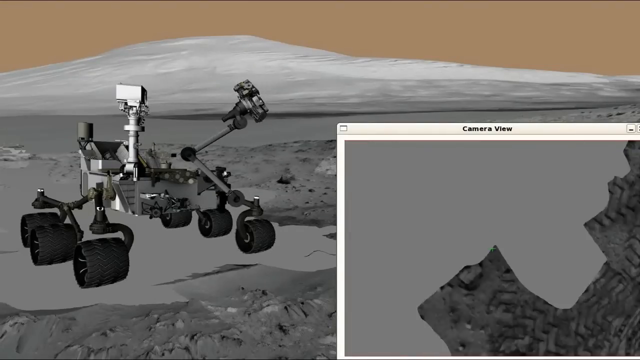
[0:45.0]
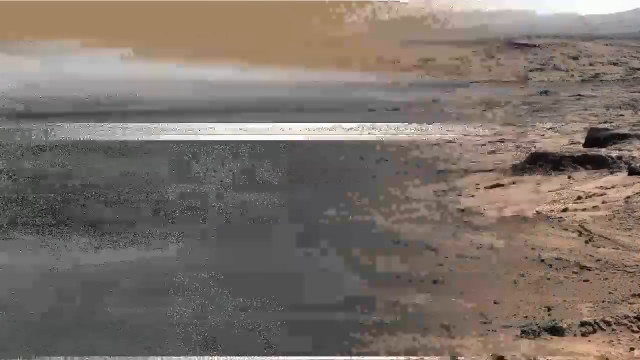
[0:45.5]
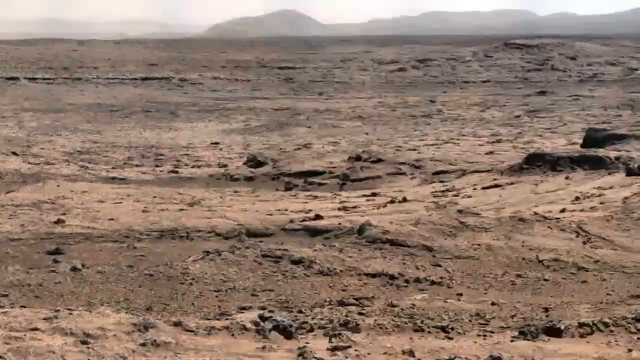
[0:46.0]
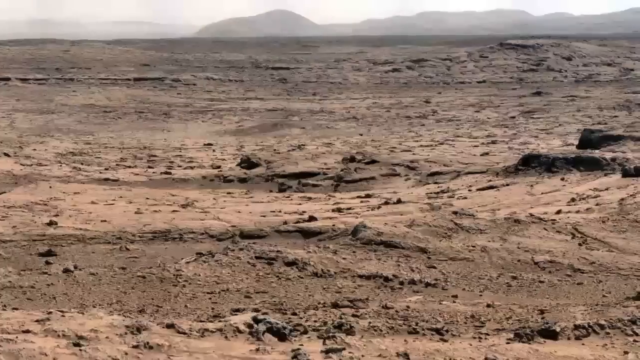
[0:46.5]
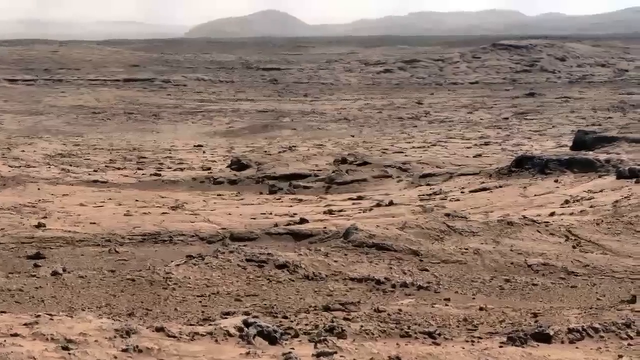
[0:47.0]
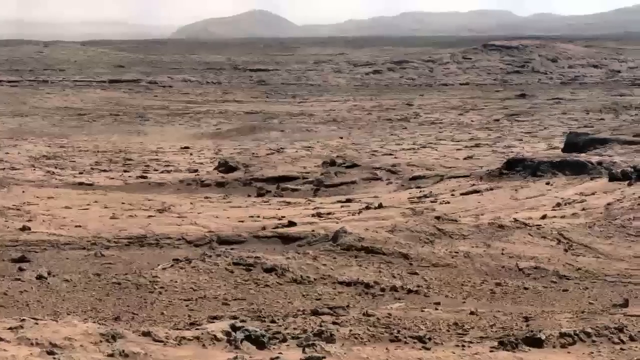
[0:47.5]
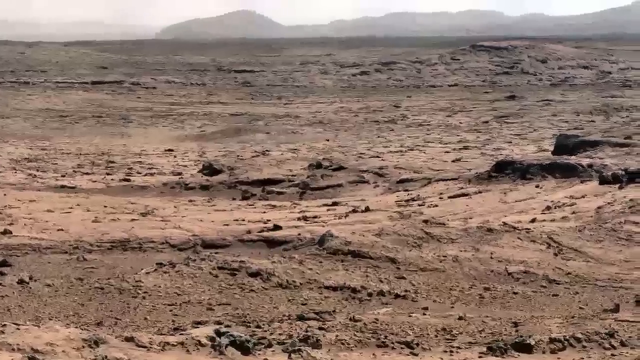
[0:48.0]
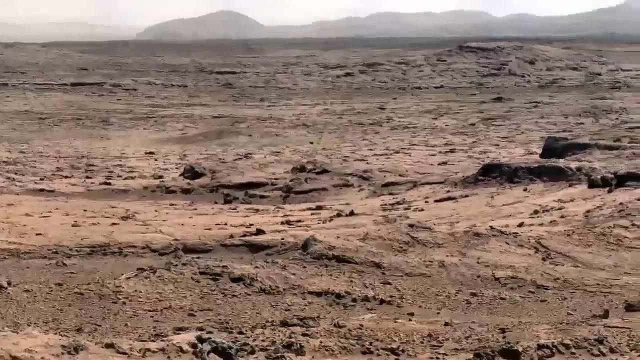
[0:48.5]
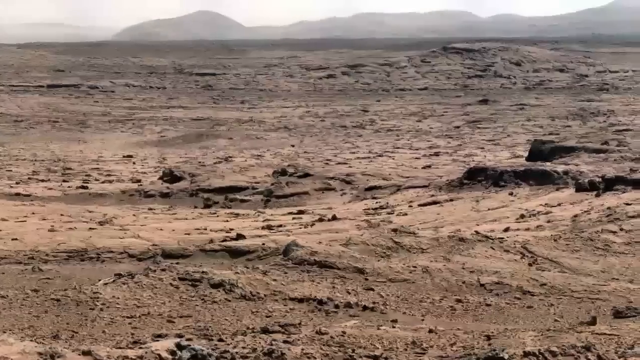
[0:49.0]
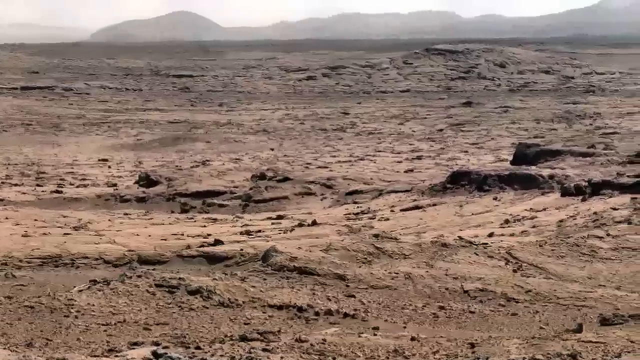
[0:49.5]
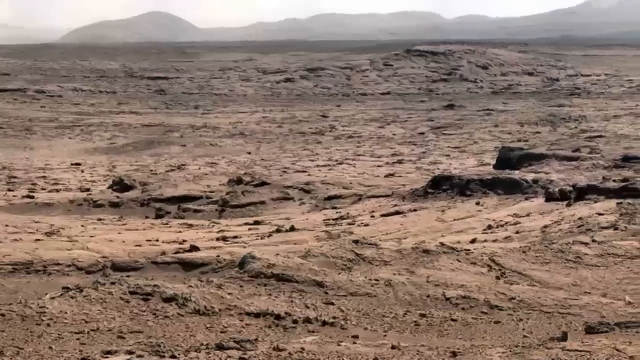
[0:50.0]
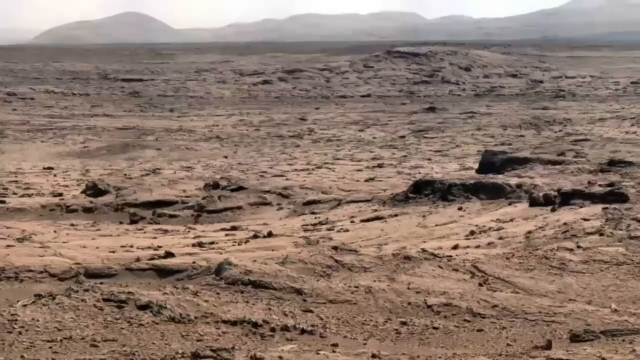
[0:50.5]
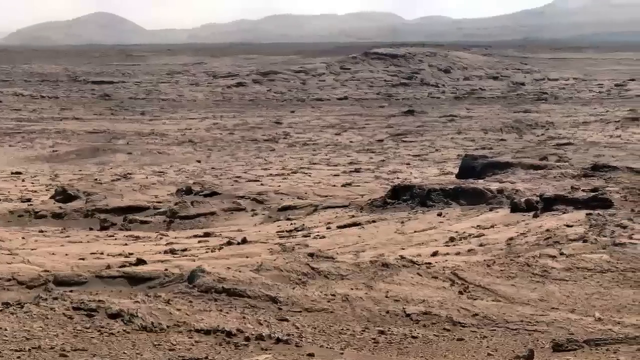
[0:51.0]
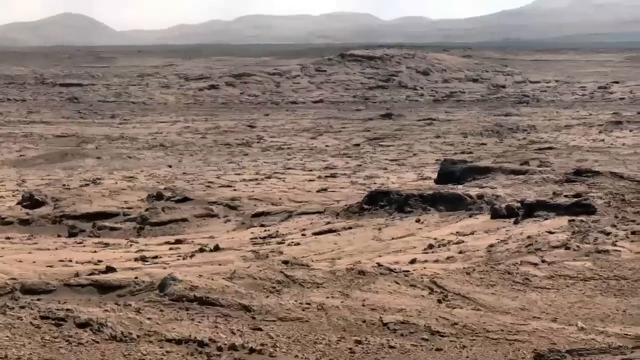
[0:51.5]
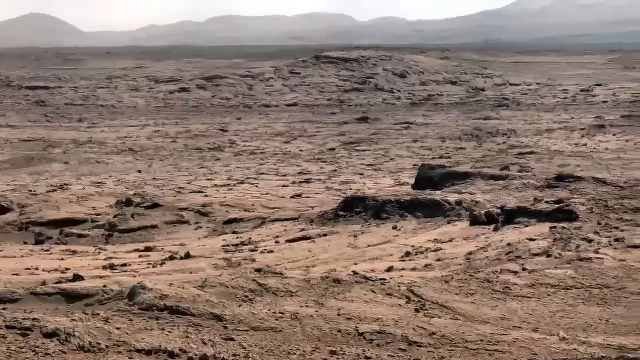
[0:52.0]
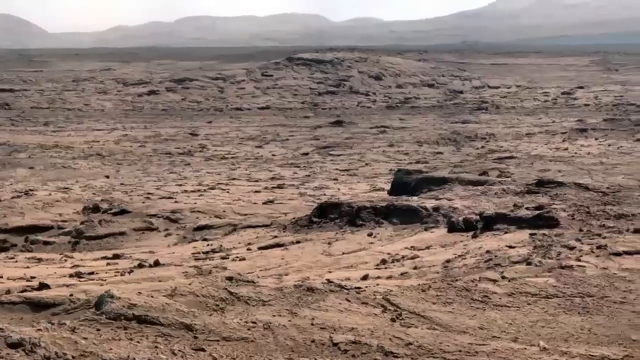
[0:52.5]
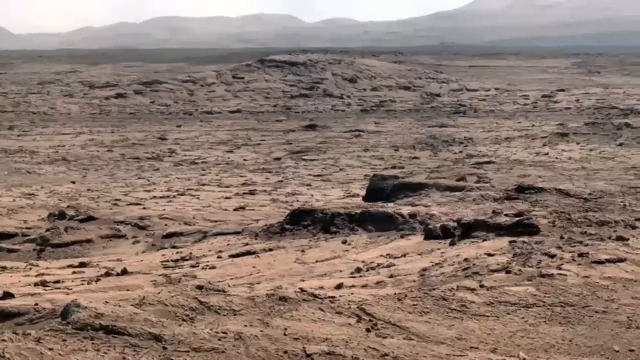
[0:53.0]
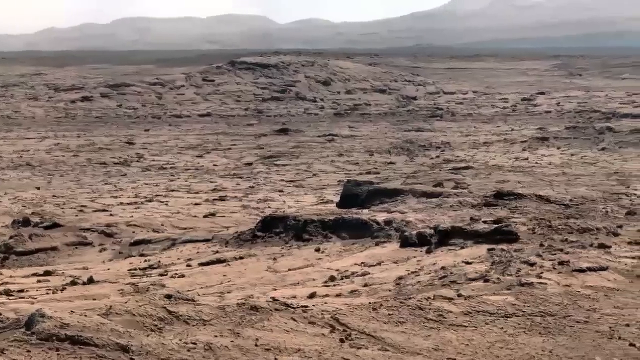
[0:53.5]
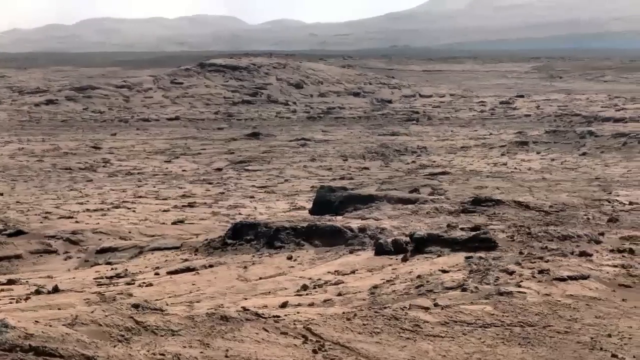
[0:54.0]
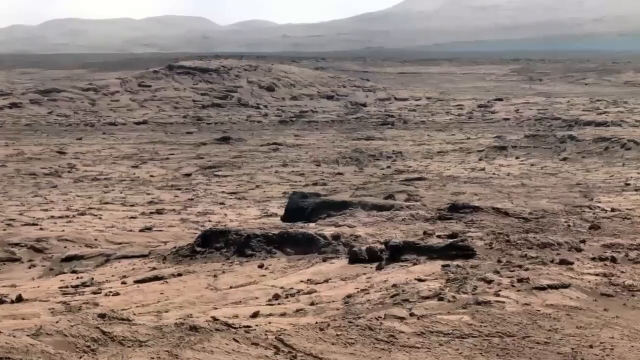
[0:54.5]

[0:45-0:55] What appears to be the surface of Mars fills the view: a lot of brown dirt, very dusty, with some sort of rock outcroppings sticking up out of the soil. In the distance are some hills and a very white, sort of grayed-out sky. There is no real activity or focal point; the shot is just of the ground, with a zooming, sort of panning look around the foreground and no distinctive features. The dirt looks very dry, caked and cracked, and some pebbles or gravelly rock are at the front of the image. The distance seems more like a plateau, a relatively flat area, with a very small hill on the left of the image. For the most part it is a wide, expansive, flat, brown, dusty, rocky area with an unclear mountain range in the background whose top goes off the image. Some sky is visible, but the image mostly focuses on the ground close to the camera.